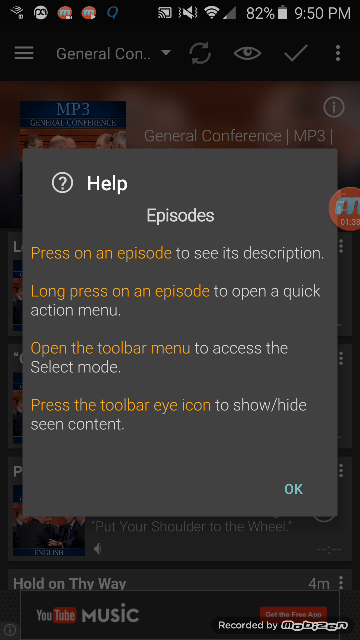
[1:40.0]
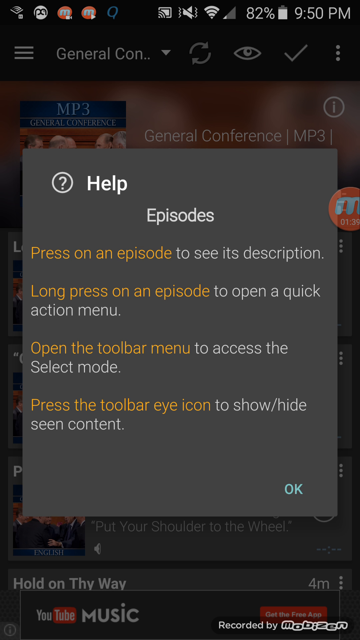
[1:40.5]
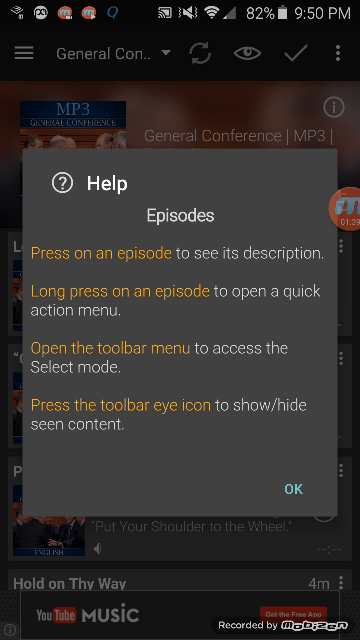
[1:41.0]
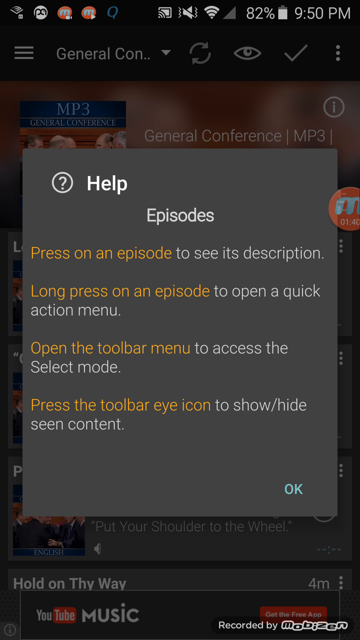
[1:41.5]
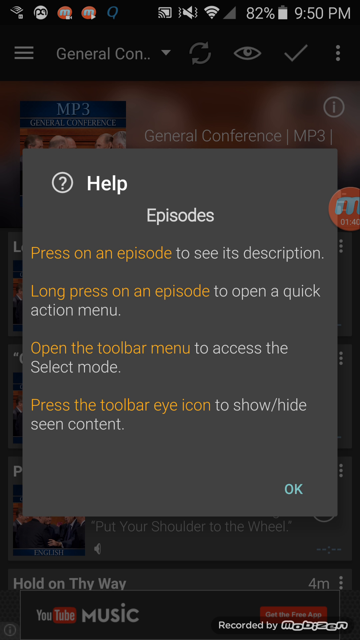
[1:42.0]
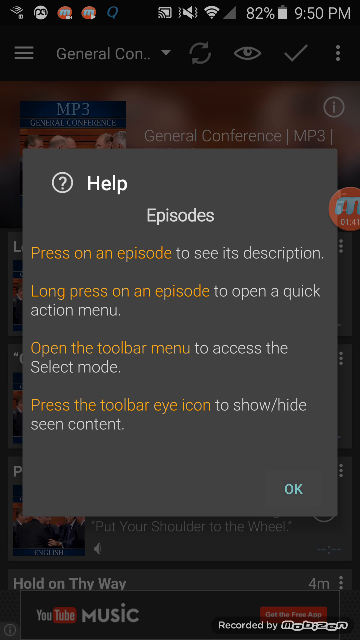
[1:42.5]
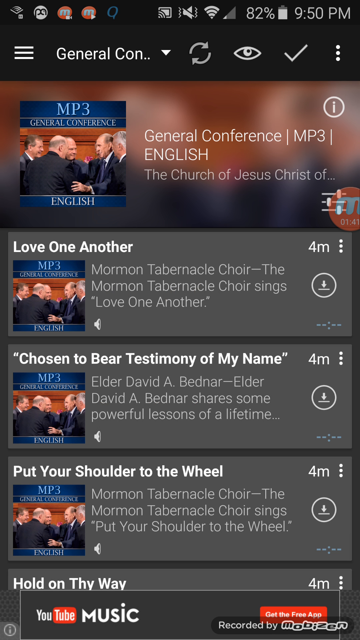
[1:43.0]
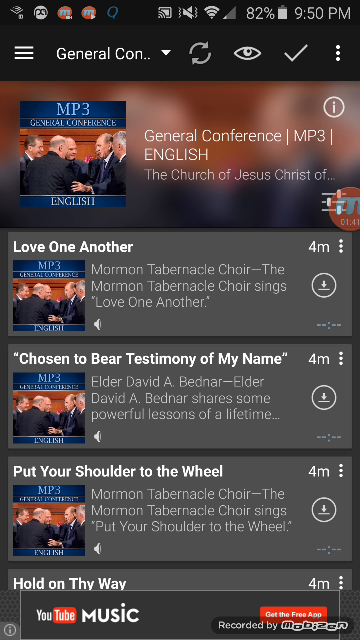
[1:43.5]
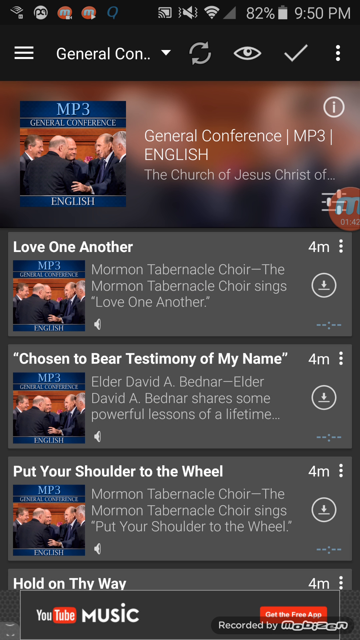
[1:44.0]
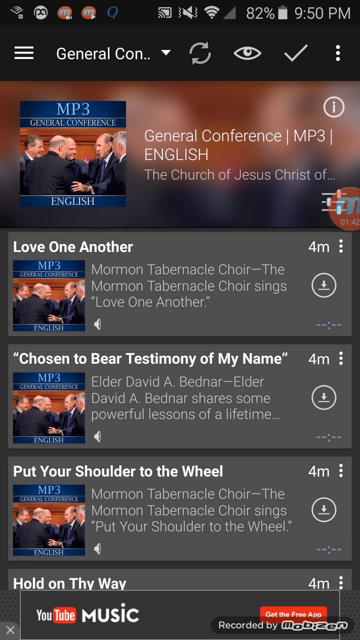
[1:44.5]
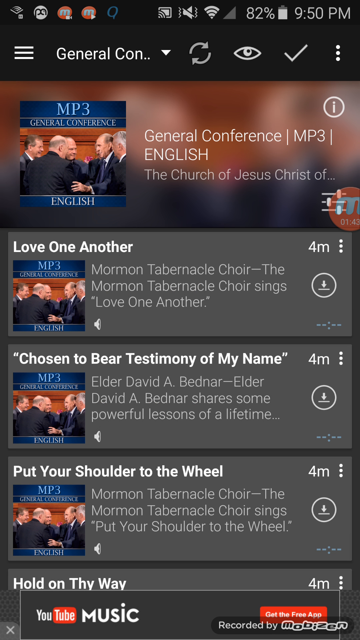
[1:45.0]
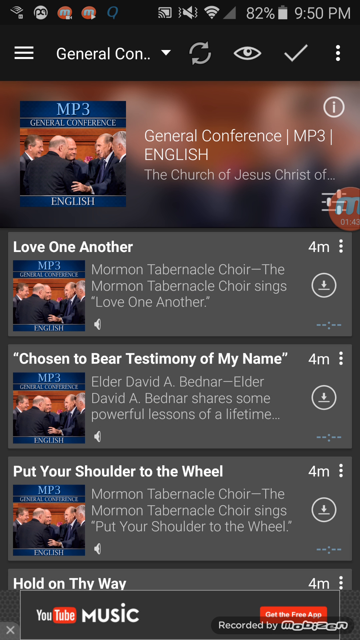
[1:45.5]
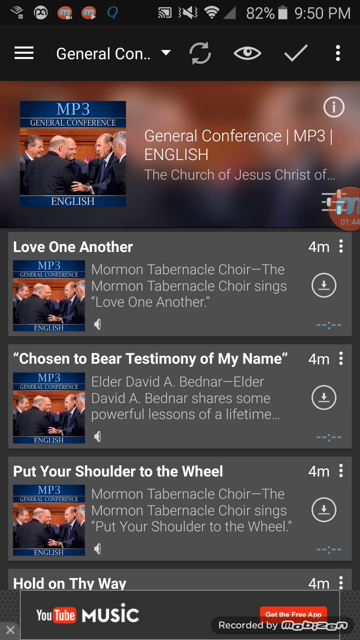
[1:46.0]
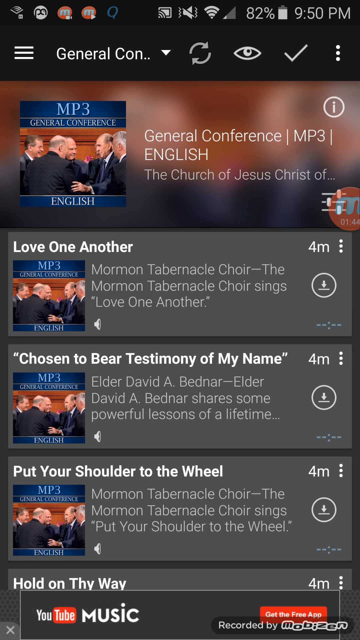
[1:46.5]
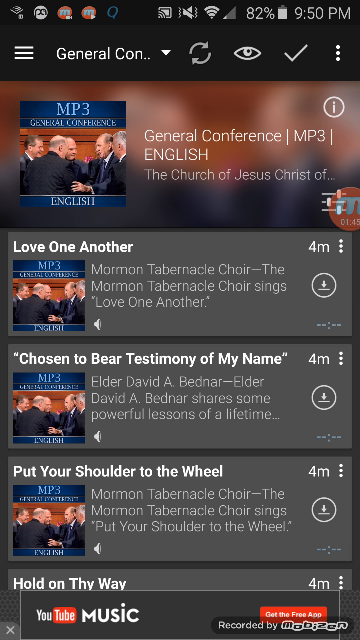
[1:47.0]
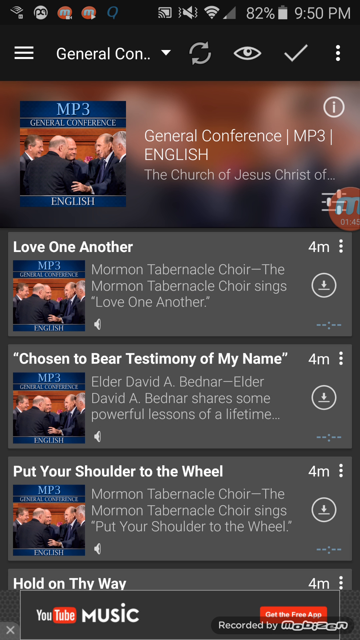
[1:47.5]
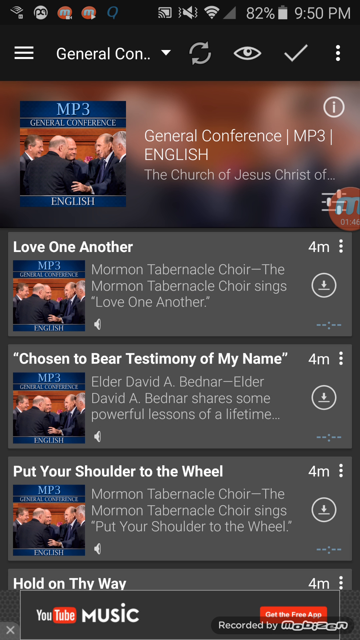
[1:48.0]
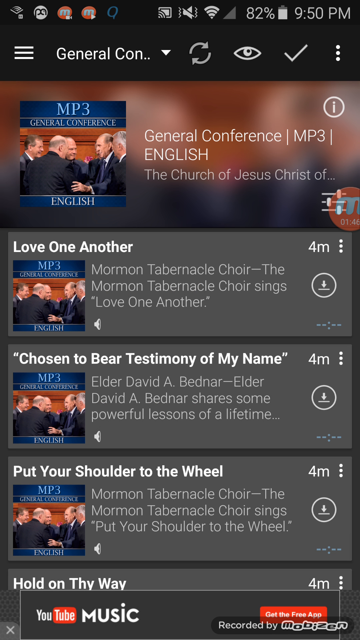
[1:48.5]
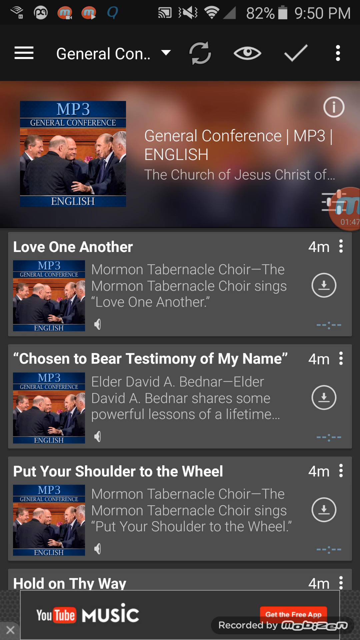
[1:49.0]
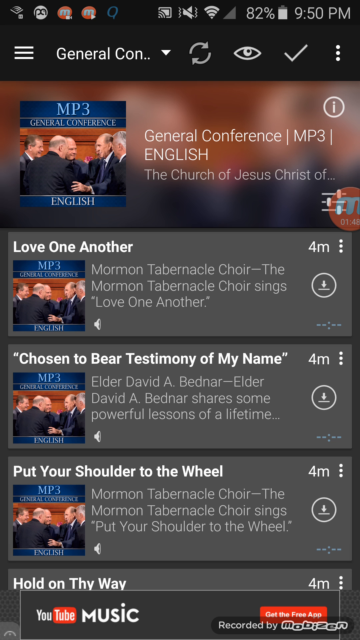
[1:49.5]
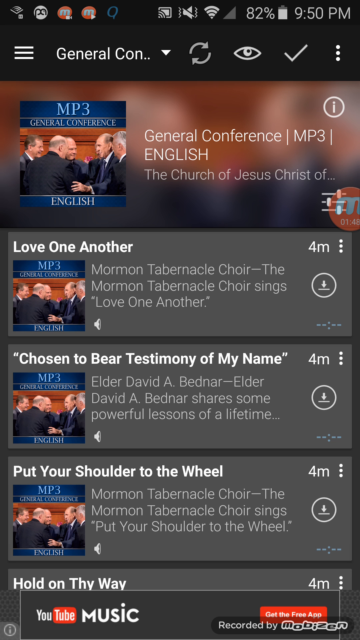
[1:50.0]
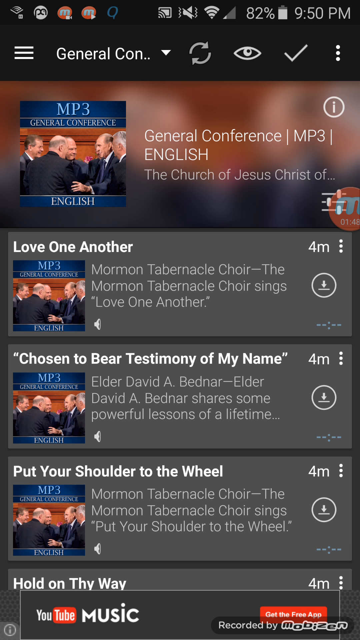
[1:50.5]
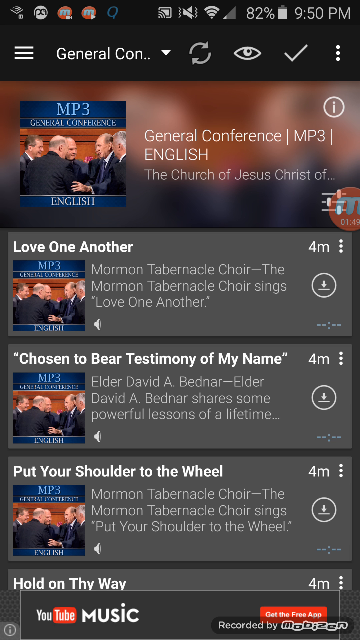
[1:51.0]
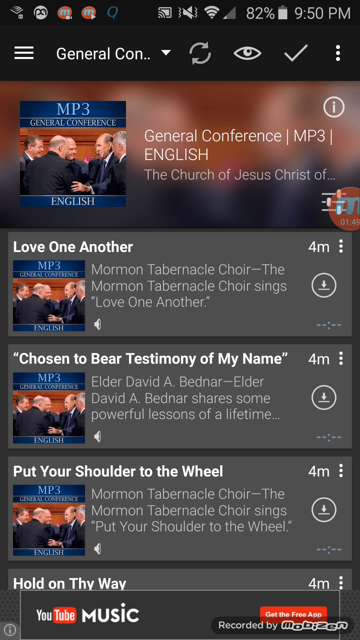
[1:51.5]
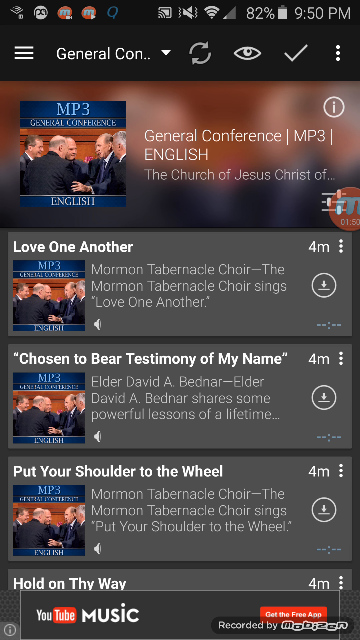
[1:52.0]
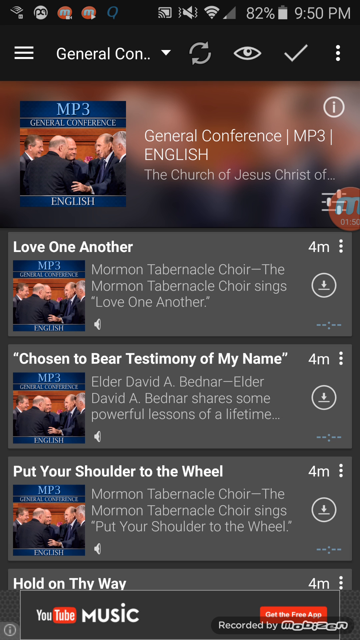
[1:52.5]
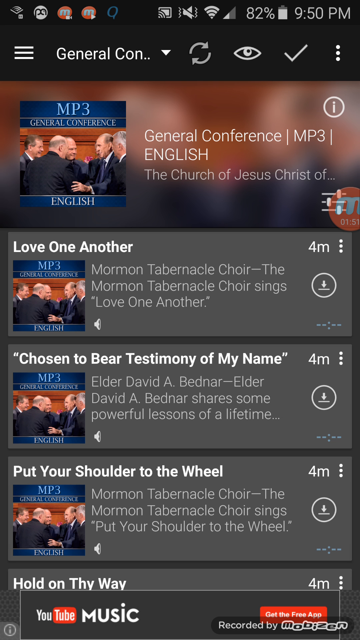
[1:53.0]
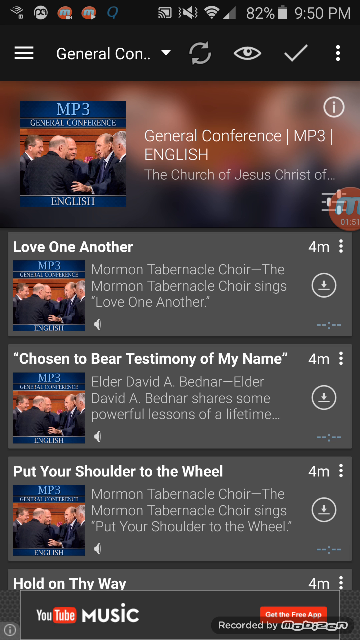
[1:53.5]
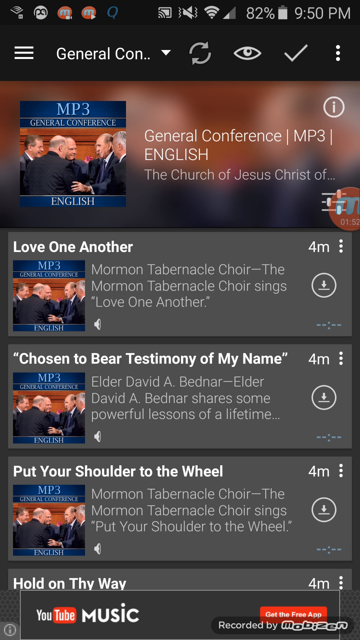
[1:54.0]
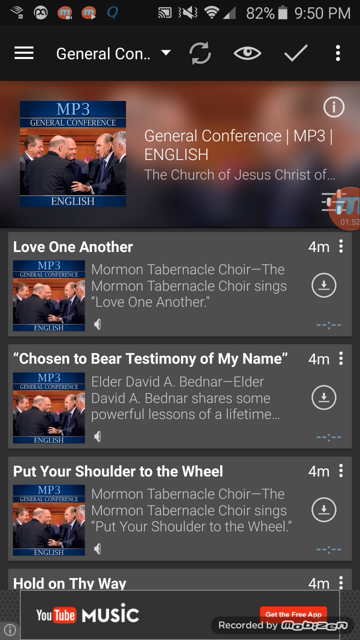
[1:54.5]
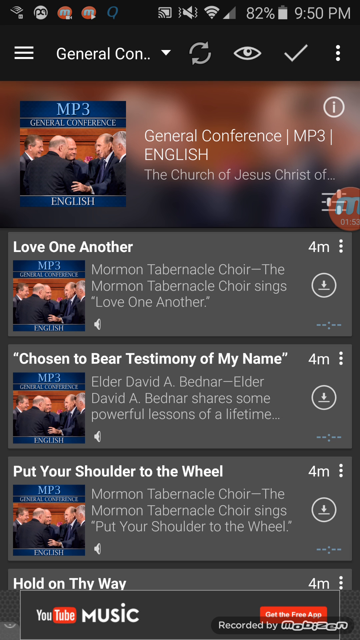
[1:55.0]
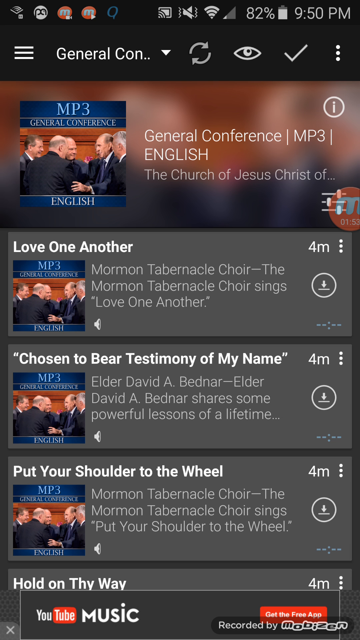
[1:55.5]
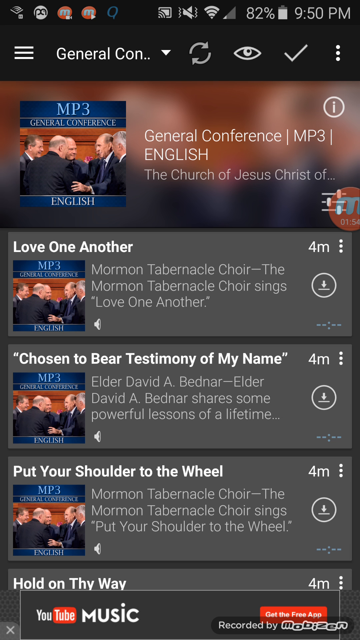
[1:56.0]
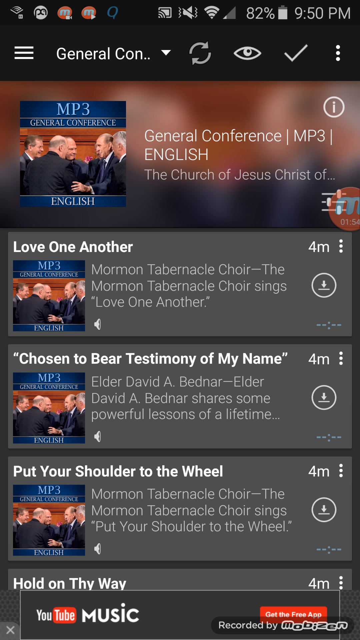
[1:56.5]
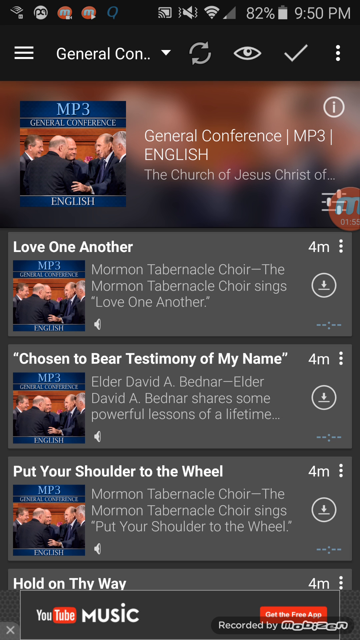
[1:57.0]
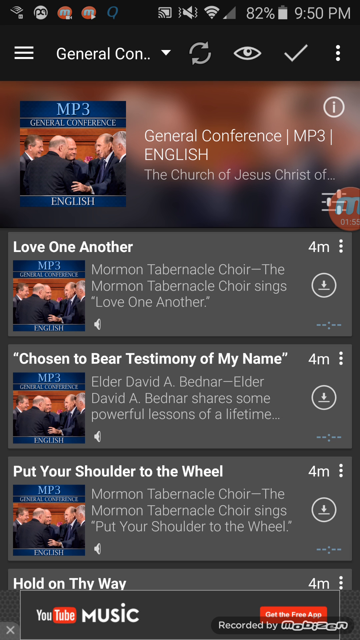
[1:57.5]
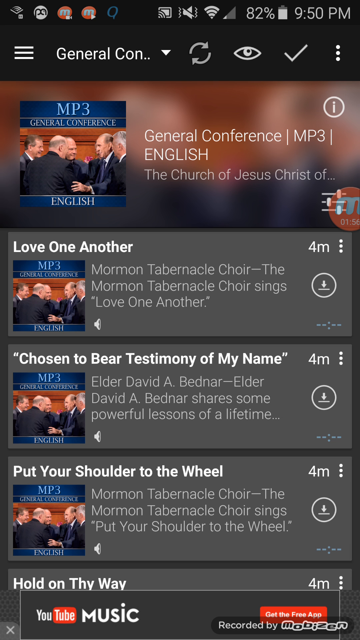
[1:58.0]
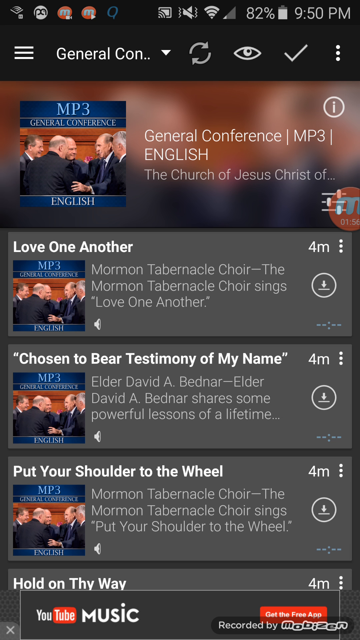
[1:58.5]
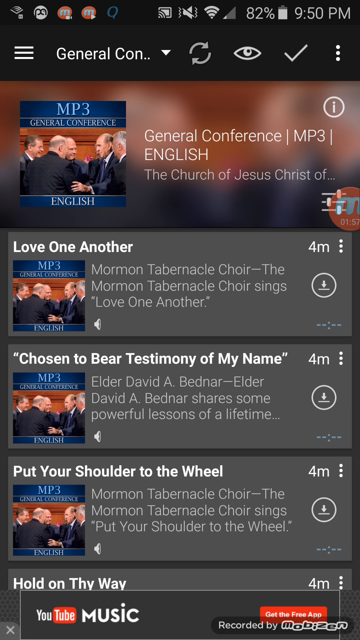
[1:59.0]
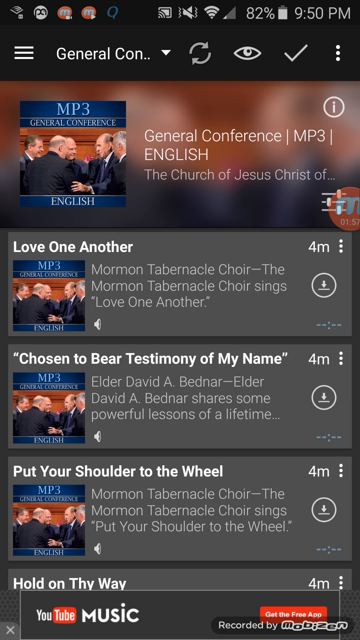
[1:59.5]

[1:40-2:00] A help pop-up window is in the center of the screen. At the top it says "help" with a question mark to the left. Beneath that the pop-up's title is "episodes", followed by buttons: "press on an episode", "long press on an episode", "open the toolbar menu", and "press the toolbar icon". At the lower right of the pop-up is a button that says "okay", probably to close it. Next, a list of podcasts available in the app appears, including General Conference, the Mormon Tabernacle Choir, and others related to the Mormon Church. The runtime of each looks like four minutes, and there is a download button next to the titles, to the right beneath the four-minute indicator.